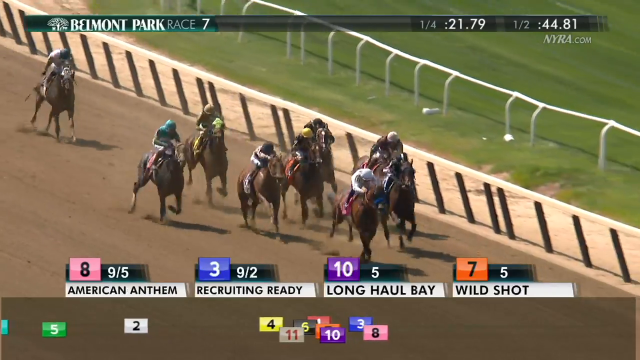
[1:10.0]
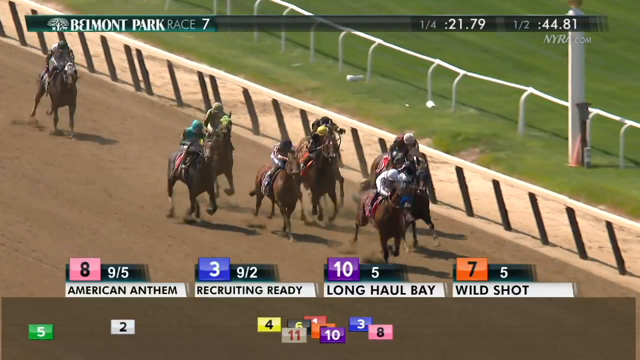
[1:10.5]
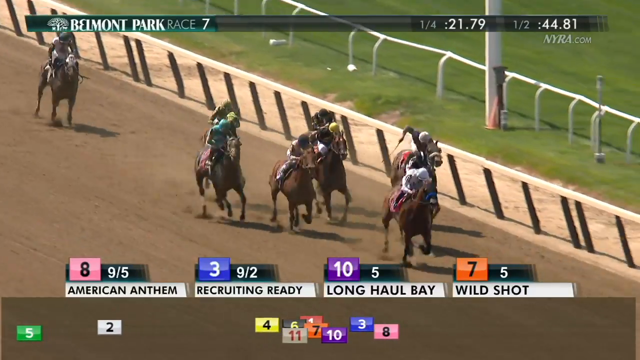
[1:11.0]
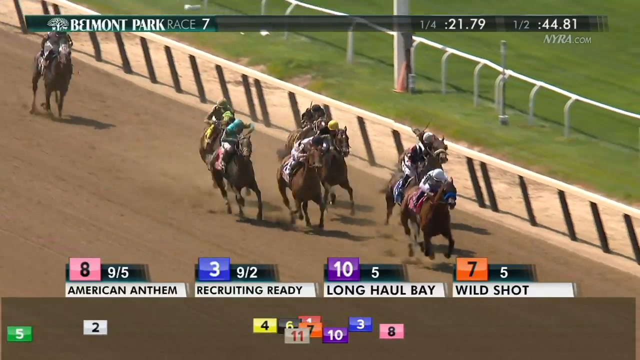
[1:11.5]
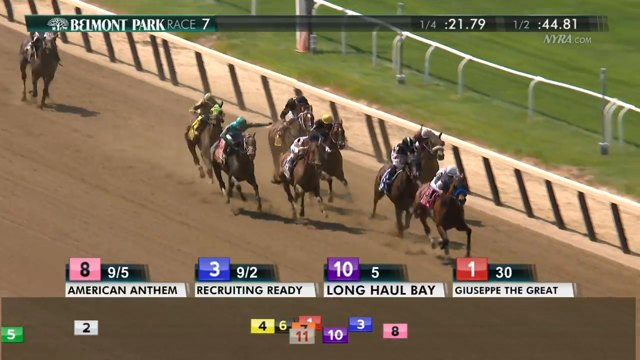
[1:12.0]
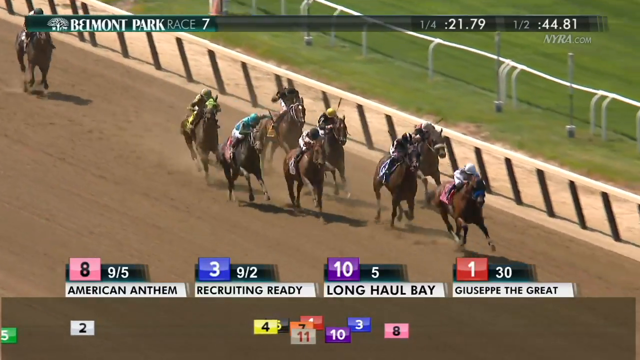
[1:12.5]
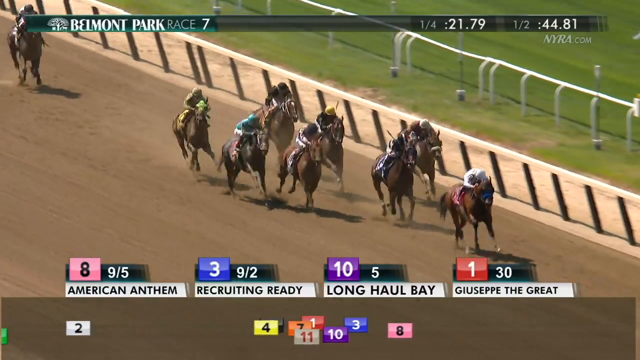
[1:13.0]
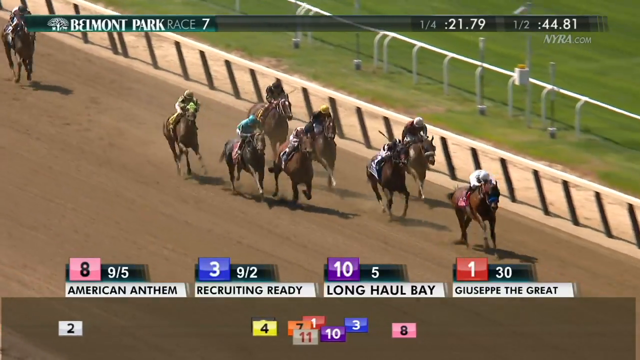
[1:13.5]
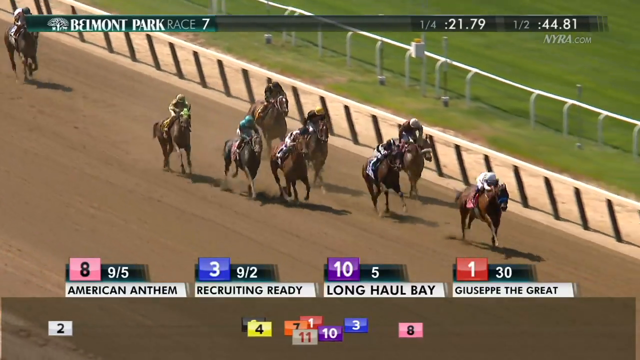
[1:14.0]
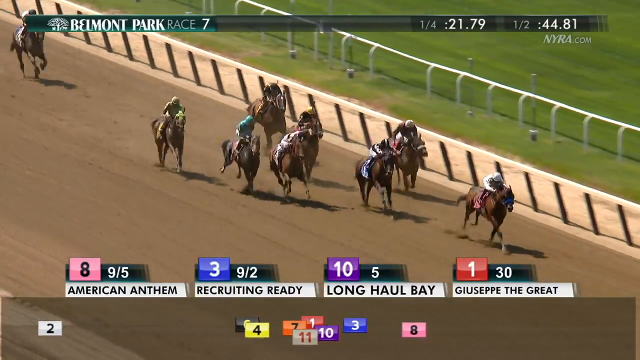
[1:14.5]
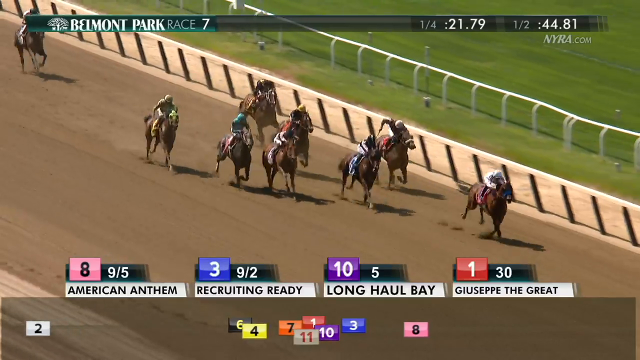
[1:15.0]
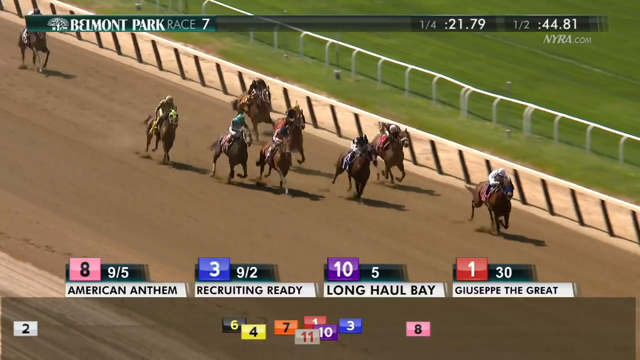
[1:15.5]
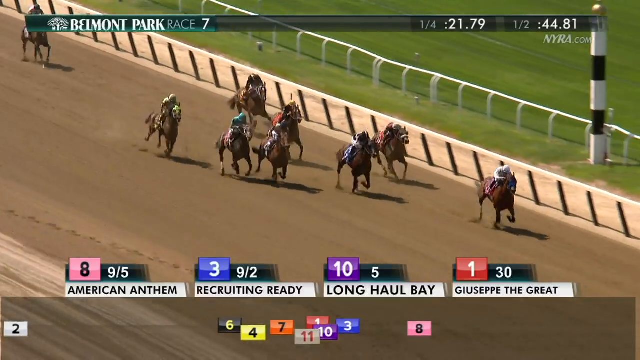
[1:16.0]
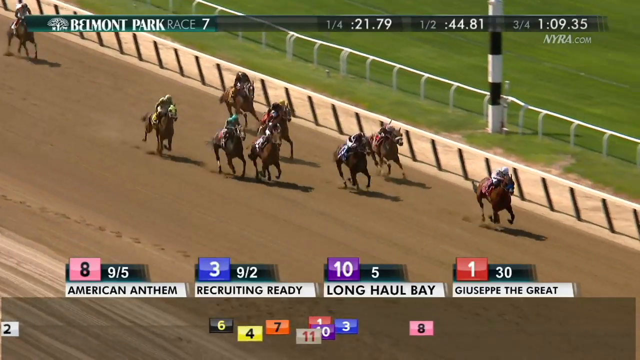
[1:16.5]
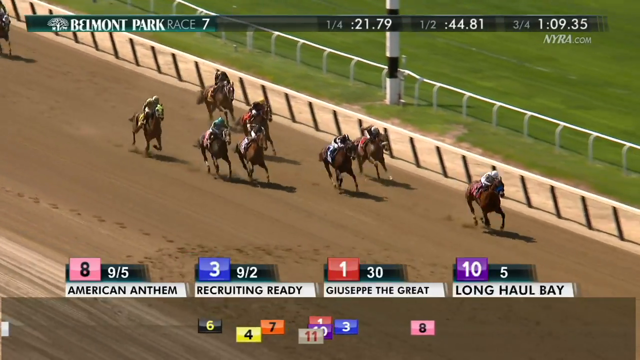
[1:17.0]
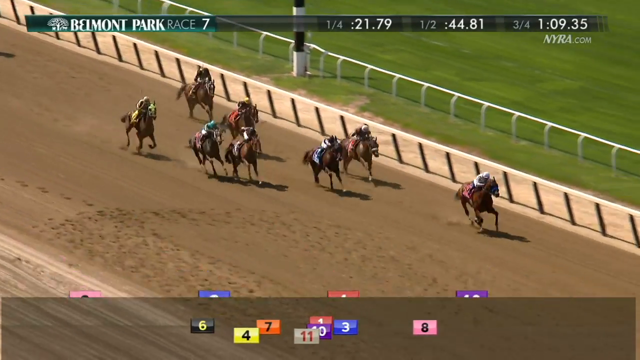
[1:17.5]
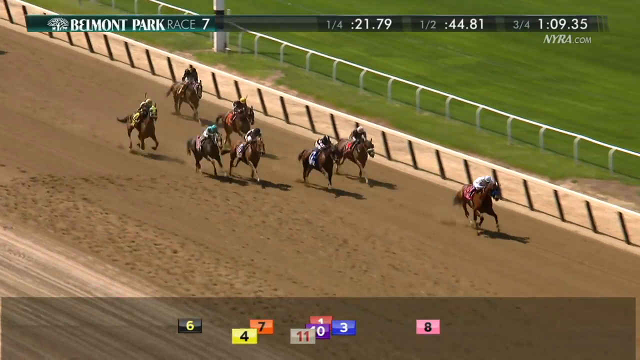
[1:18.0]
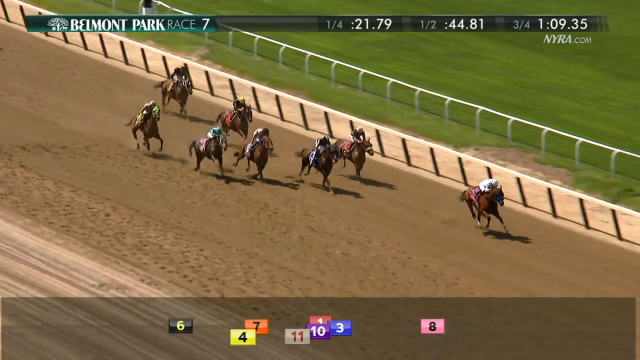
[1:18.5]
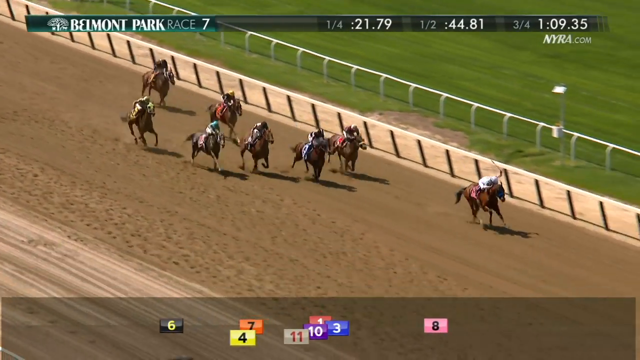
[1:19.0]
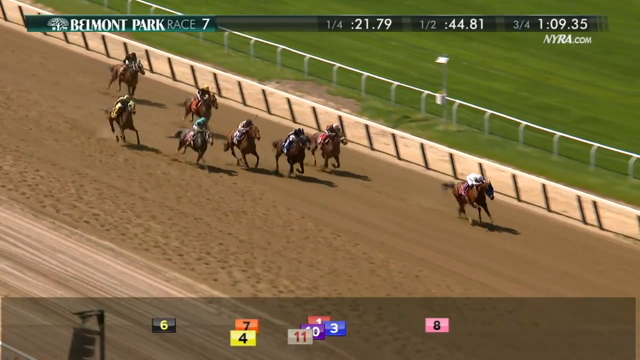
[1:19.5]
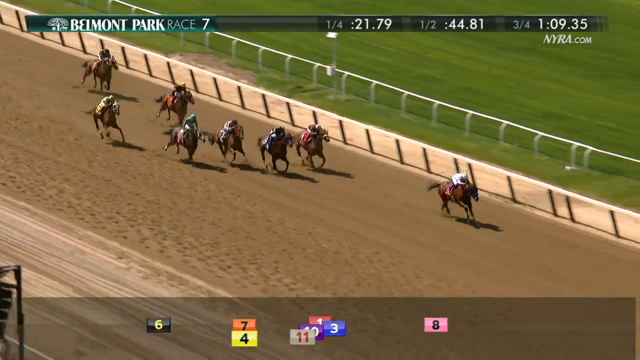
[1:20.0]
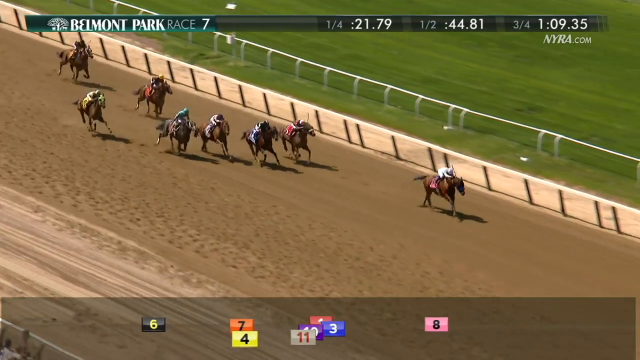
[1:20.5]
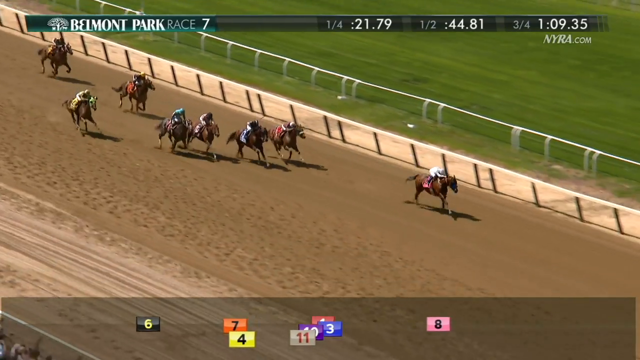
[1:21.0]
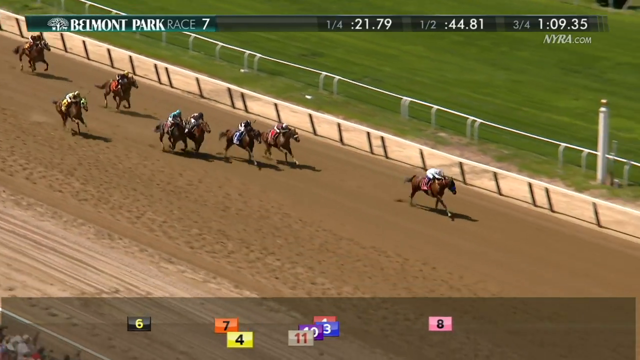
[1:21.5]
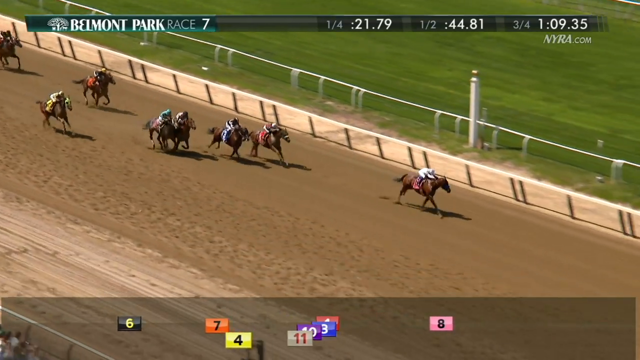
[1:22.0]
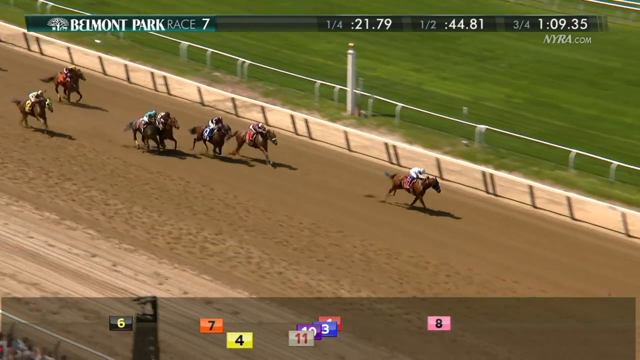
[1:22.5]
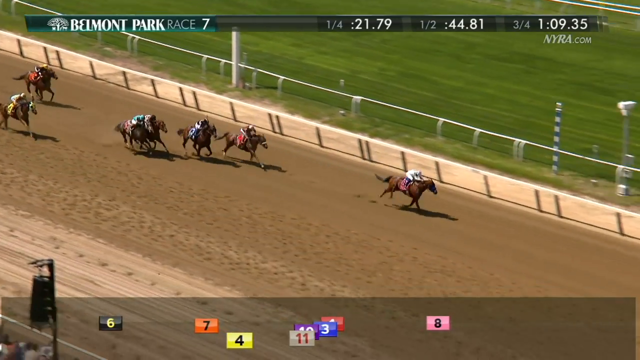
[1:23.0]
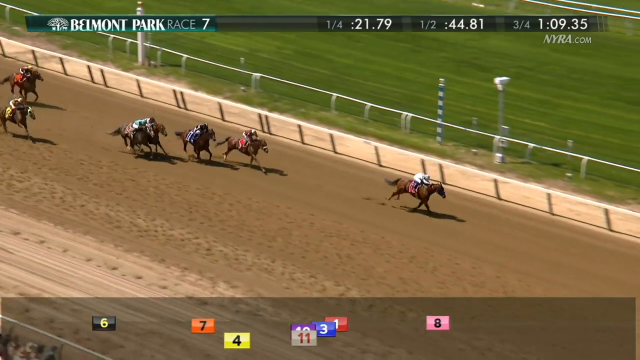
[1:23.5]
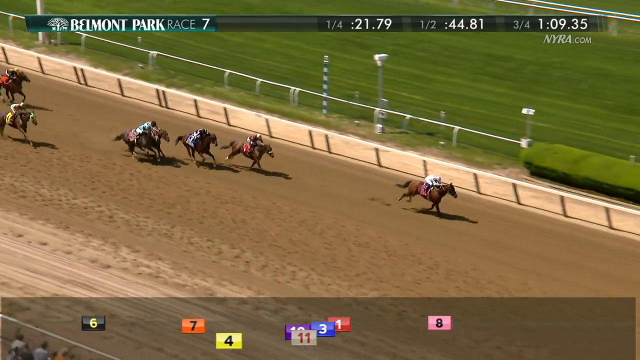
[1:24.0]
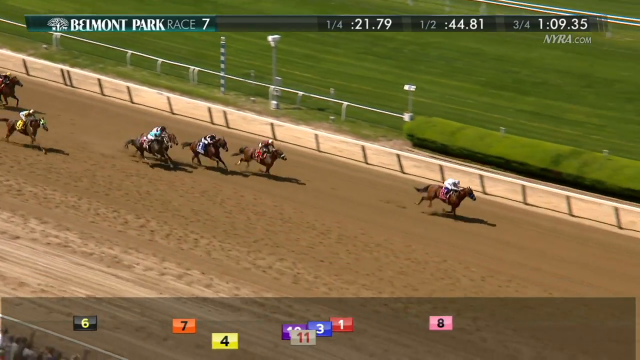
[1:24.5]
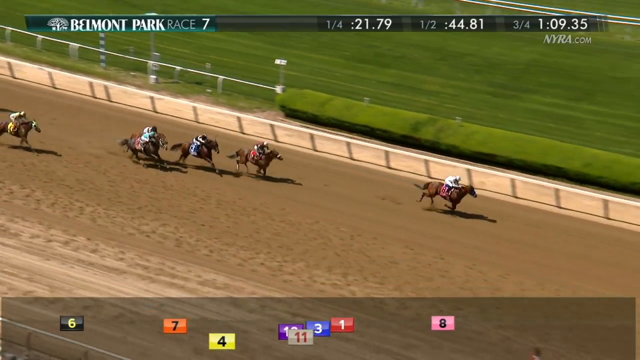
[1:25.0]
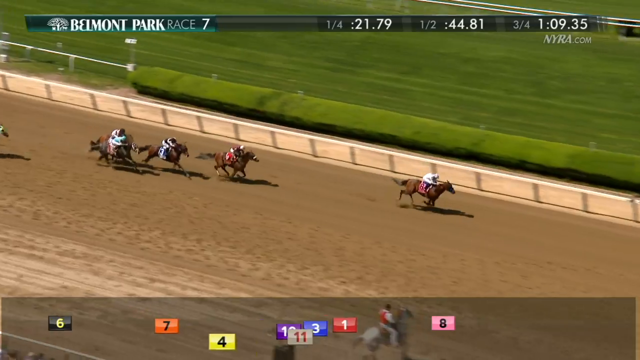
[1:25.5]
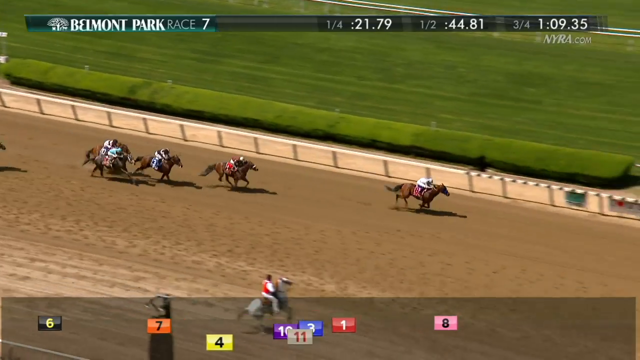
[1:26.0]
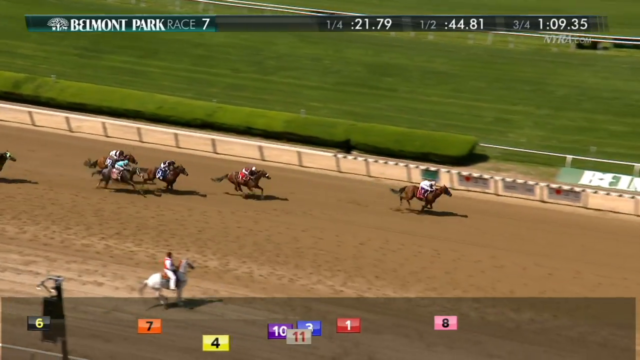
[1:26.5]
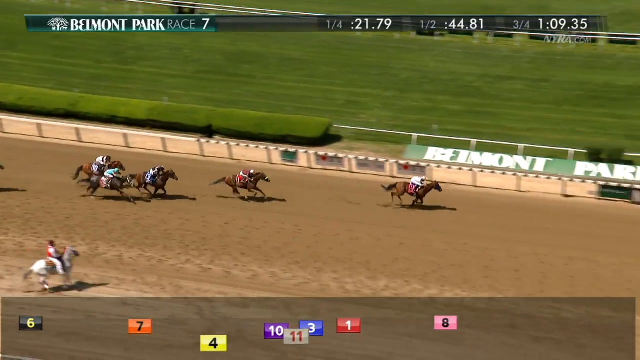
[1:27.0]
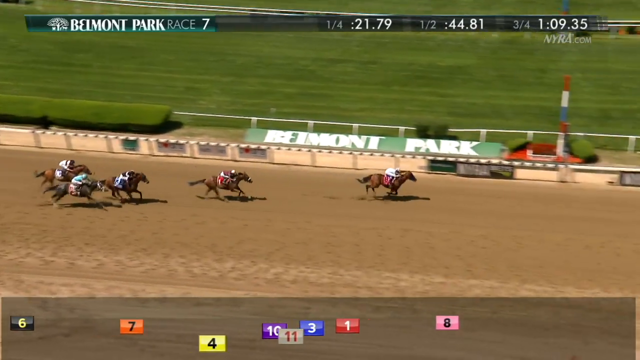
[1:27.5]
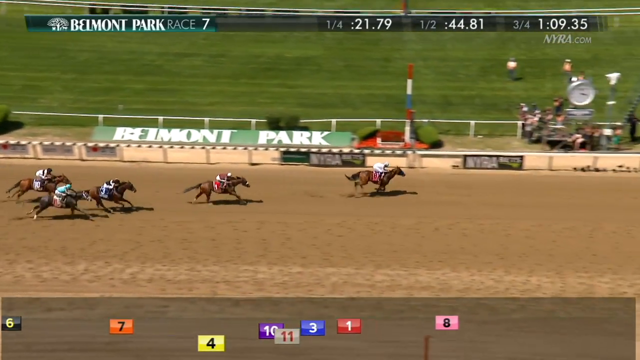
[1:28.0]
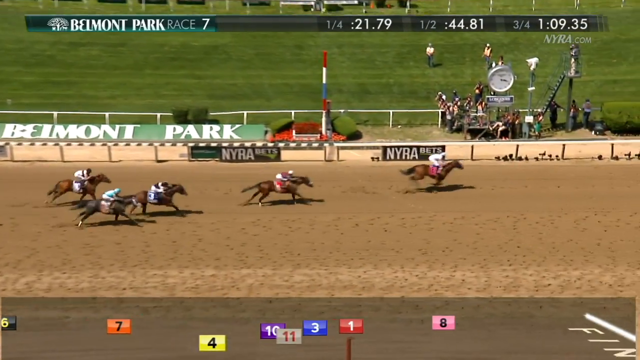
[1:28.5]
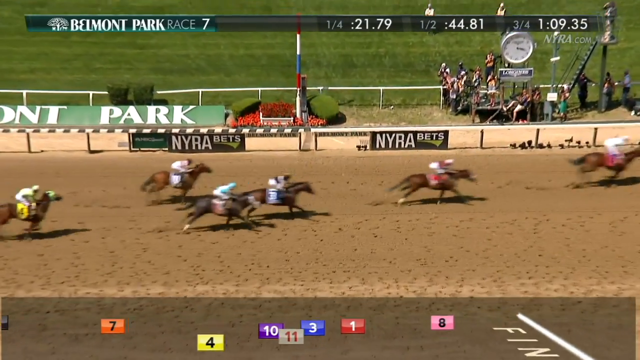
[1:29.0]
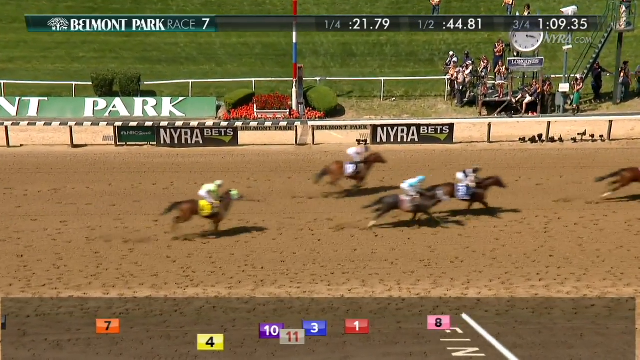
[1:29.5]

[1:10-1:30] At the top right, the fractional times show the first quarter and then the half in "44.81". Right underneath, "NYRA" appears, slanted. The camera angle shifts to the left, in front of the lead horse. One horse is very far back, about eight horses behind. The lead jockey leans his body all the way forward with his head tucked down; he may be whipping with some right-arm action, in red, but it is hard to tell, and he has a large lead. The position boxes at the bottom run from right to left, the same direction the horses are coming, showing number eight with a large lead over number one, which becomes more evident as they cross. A white finish line appears at the bottom, and the colored boxes animate to show the finishing order.